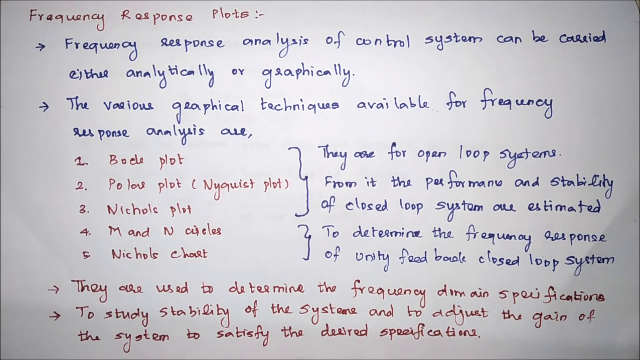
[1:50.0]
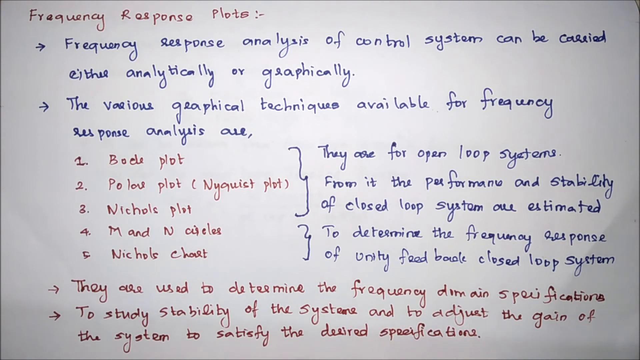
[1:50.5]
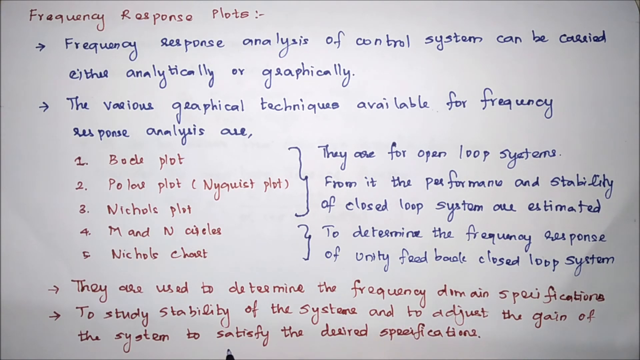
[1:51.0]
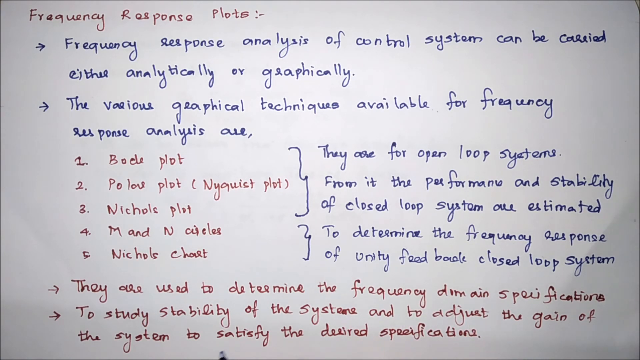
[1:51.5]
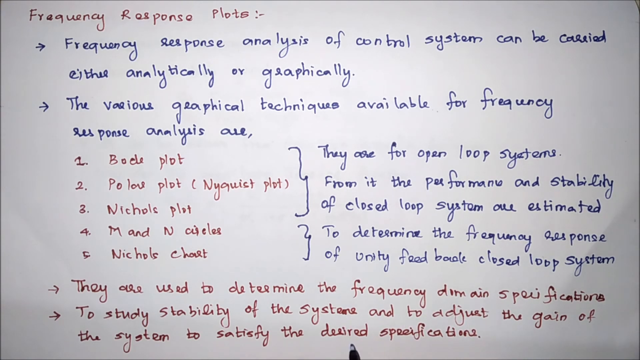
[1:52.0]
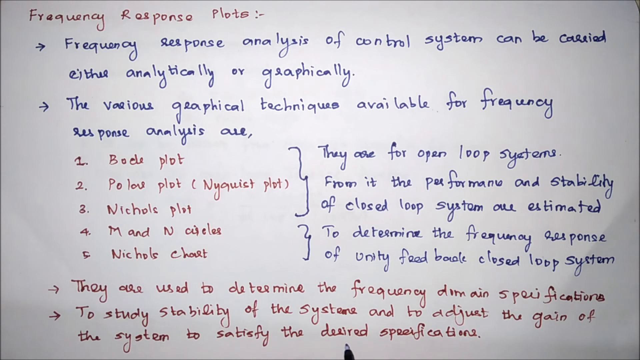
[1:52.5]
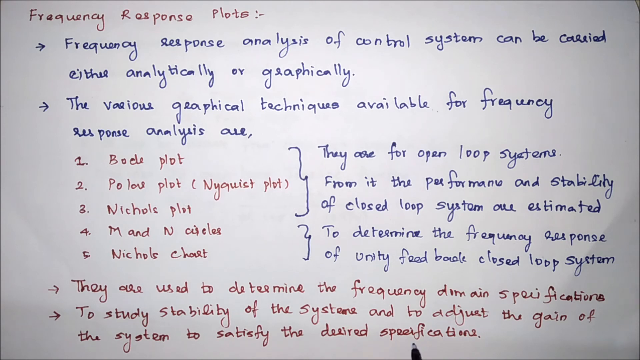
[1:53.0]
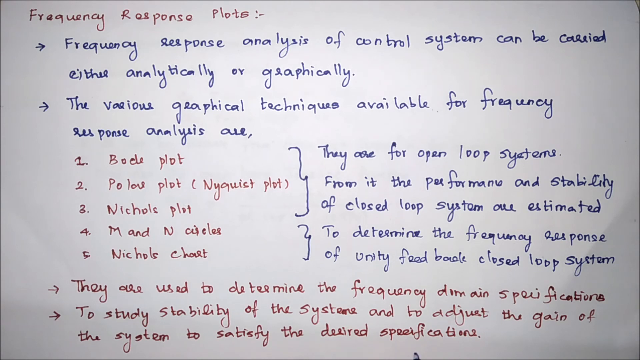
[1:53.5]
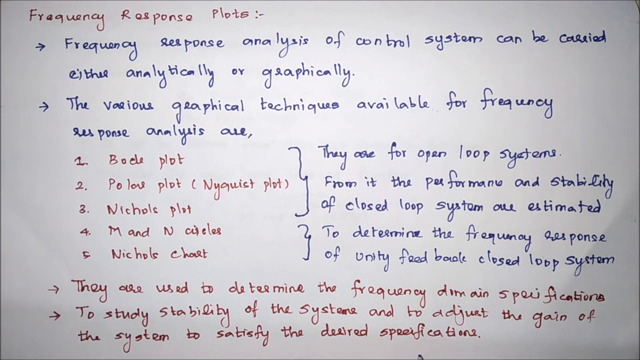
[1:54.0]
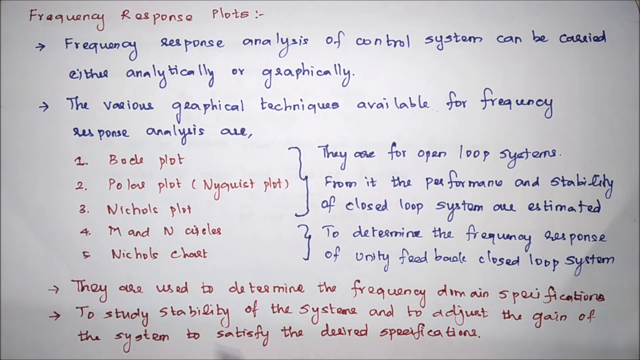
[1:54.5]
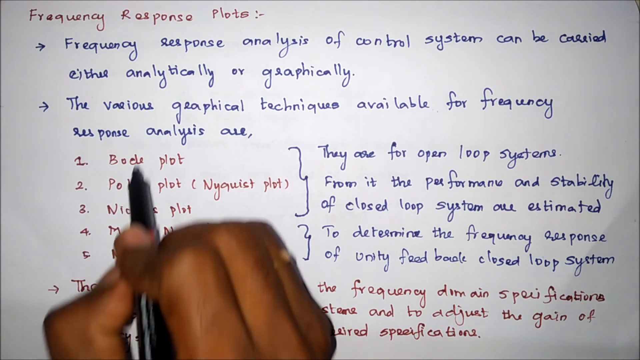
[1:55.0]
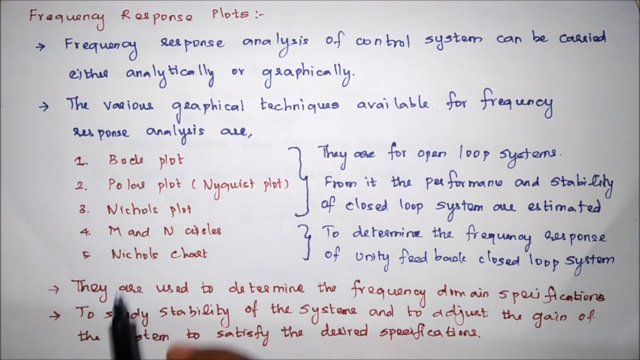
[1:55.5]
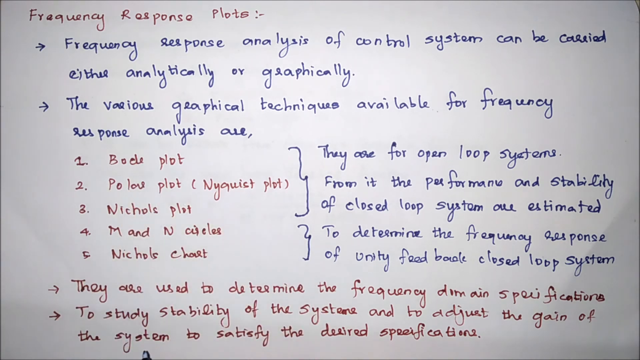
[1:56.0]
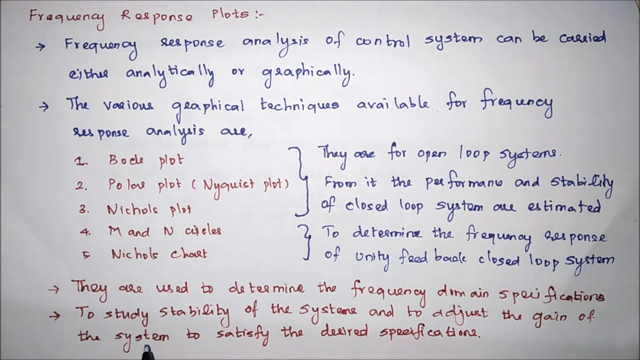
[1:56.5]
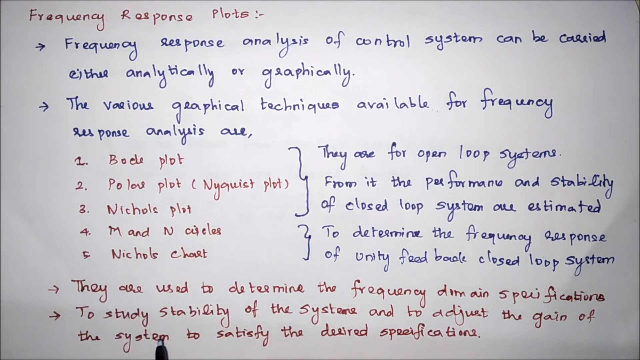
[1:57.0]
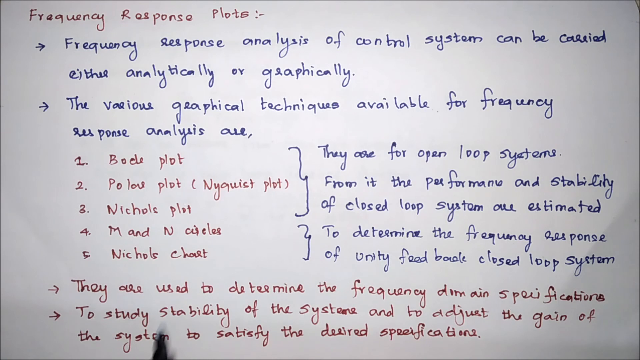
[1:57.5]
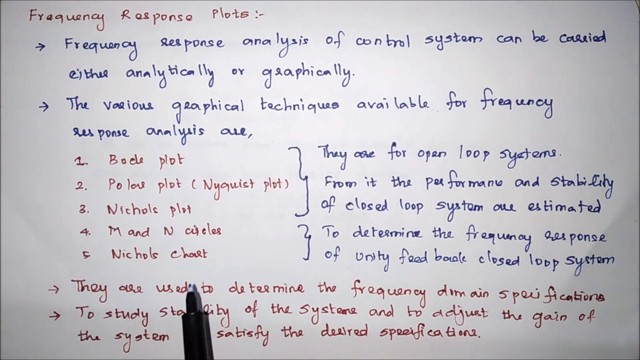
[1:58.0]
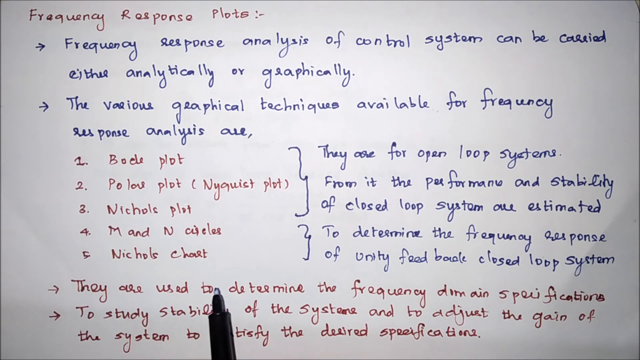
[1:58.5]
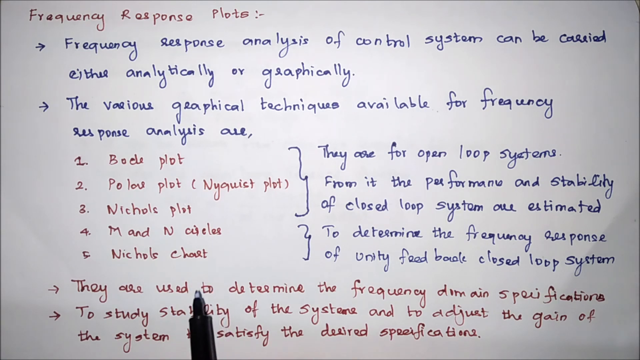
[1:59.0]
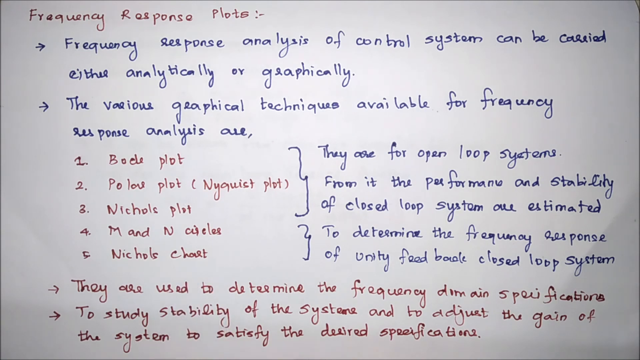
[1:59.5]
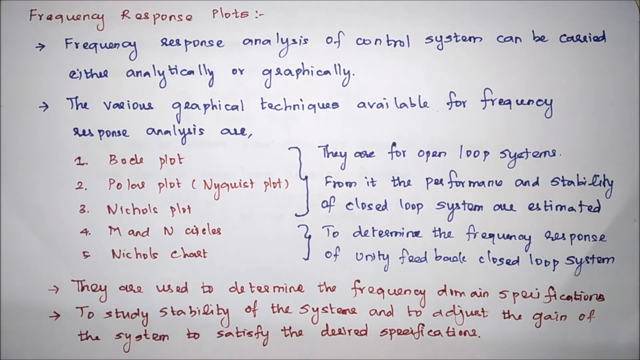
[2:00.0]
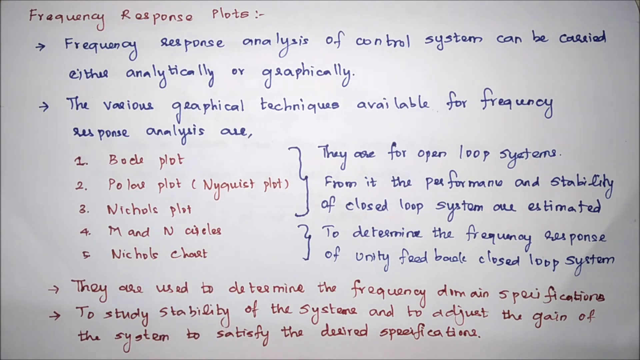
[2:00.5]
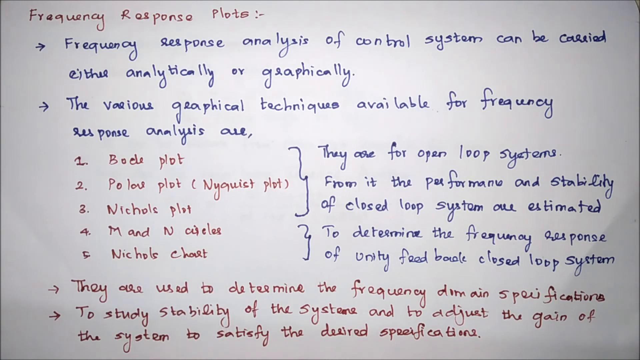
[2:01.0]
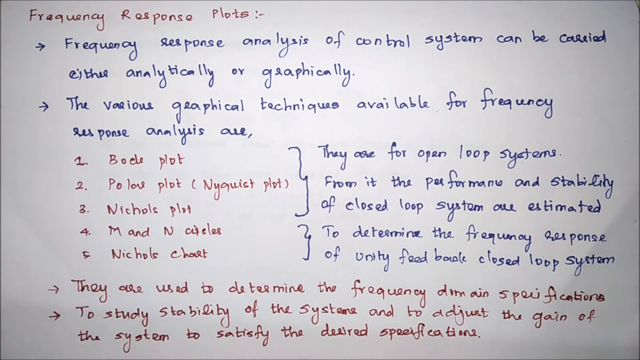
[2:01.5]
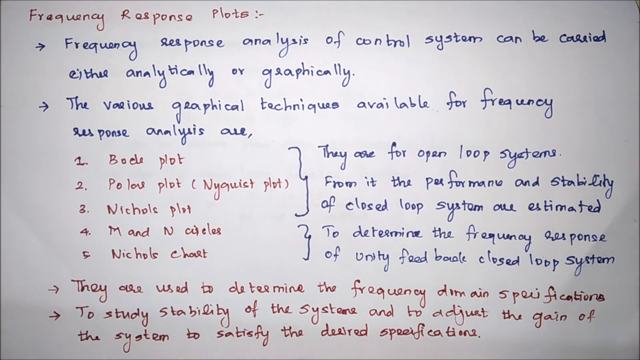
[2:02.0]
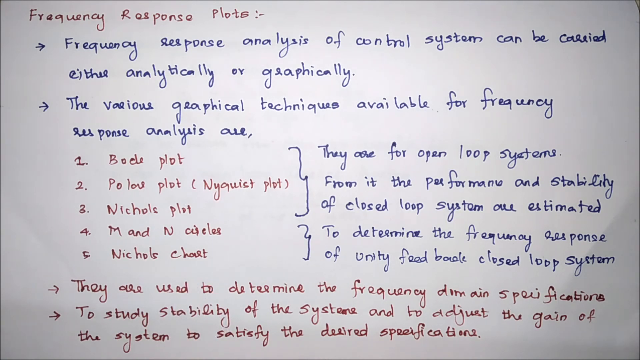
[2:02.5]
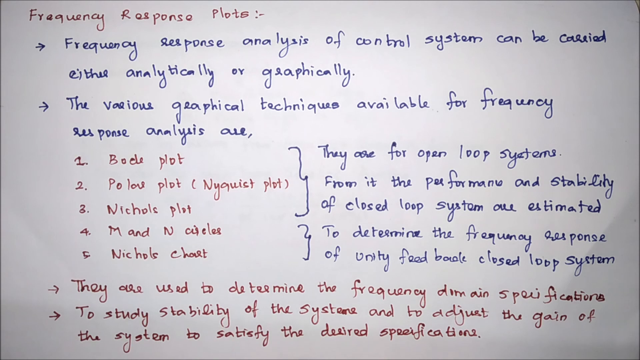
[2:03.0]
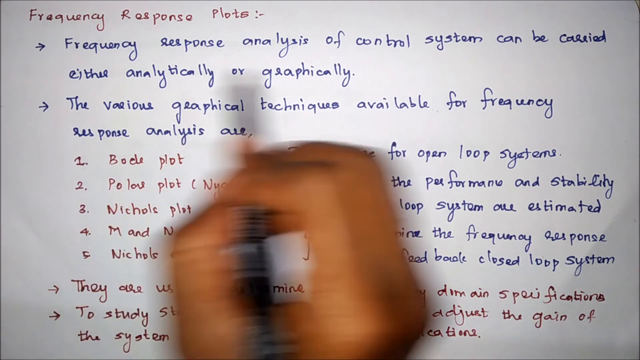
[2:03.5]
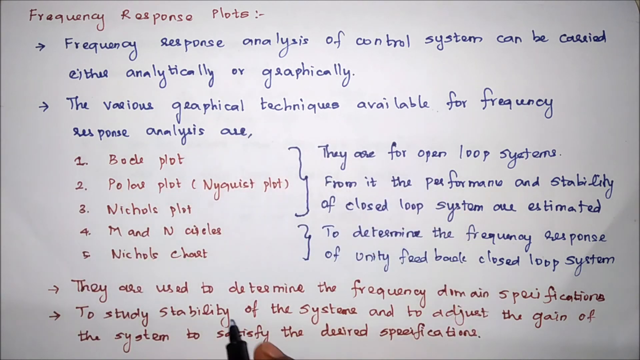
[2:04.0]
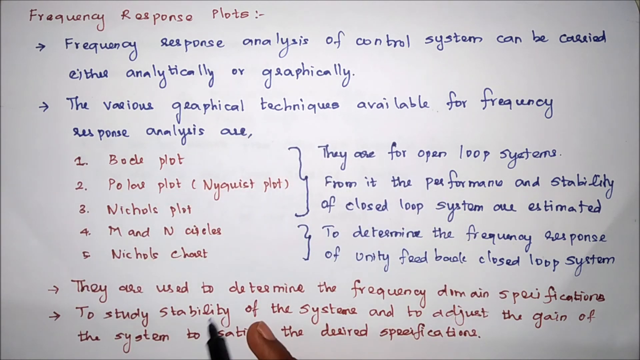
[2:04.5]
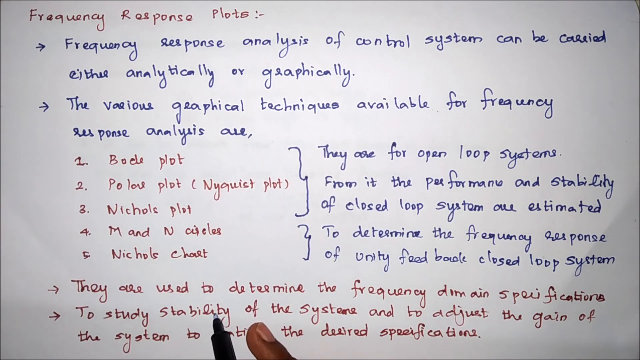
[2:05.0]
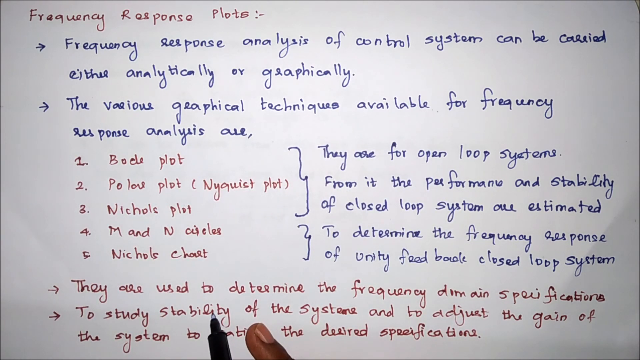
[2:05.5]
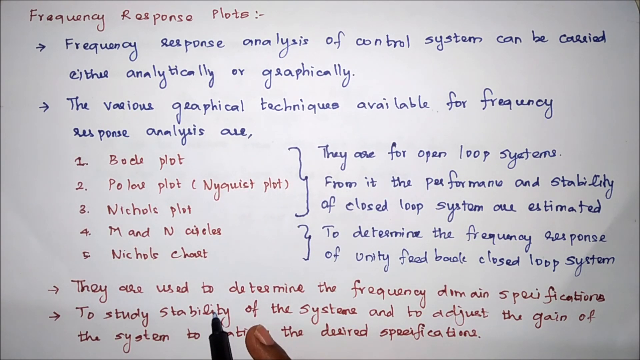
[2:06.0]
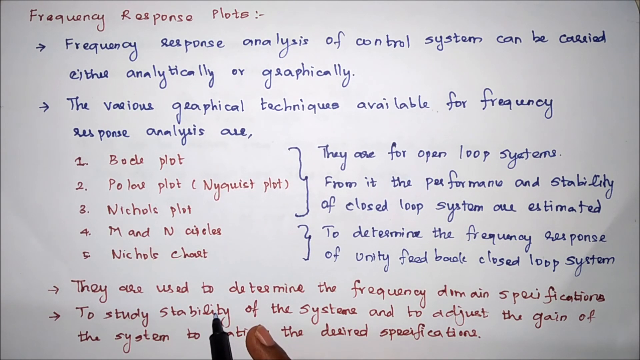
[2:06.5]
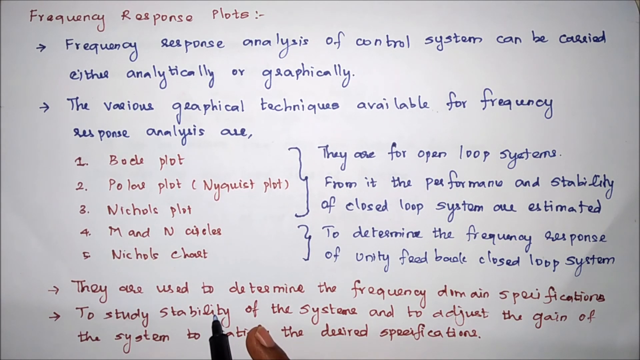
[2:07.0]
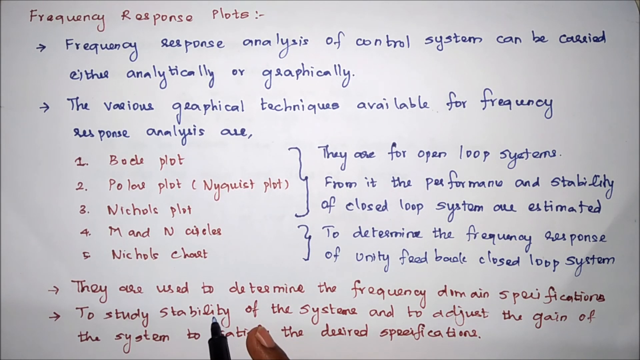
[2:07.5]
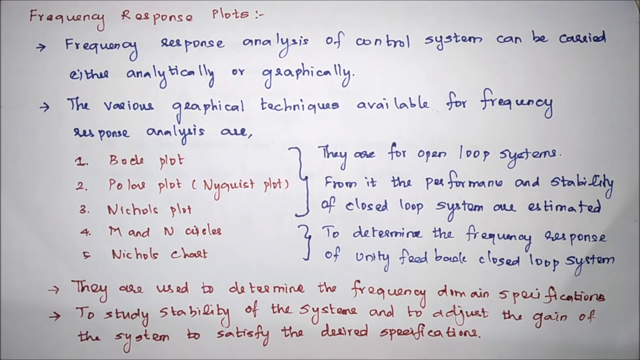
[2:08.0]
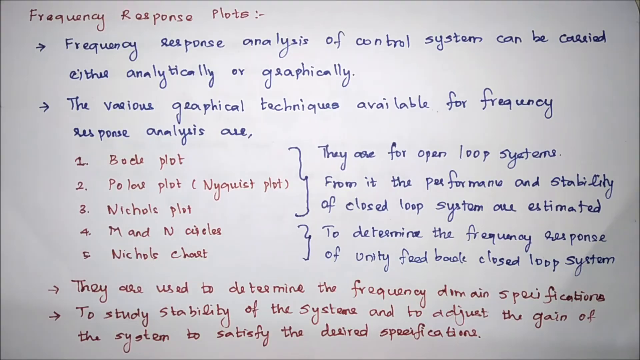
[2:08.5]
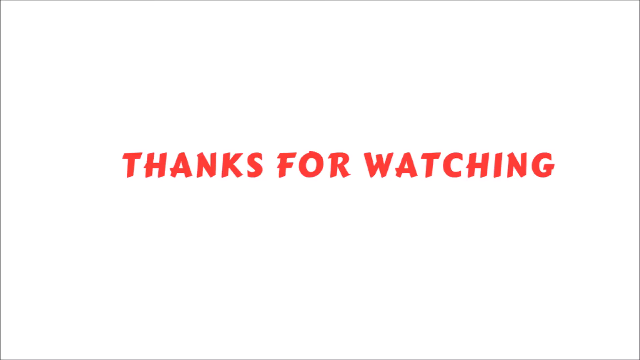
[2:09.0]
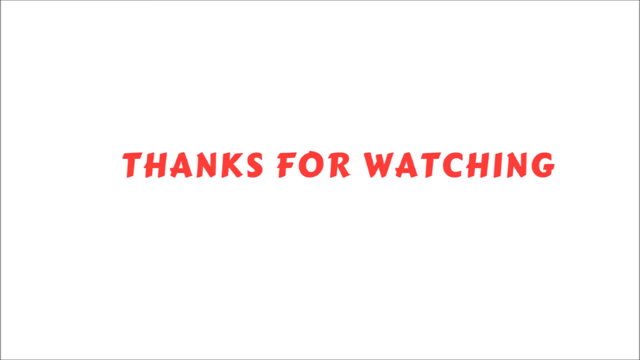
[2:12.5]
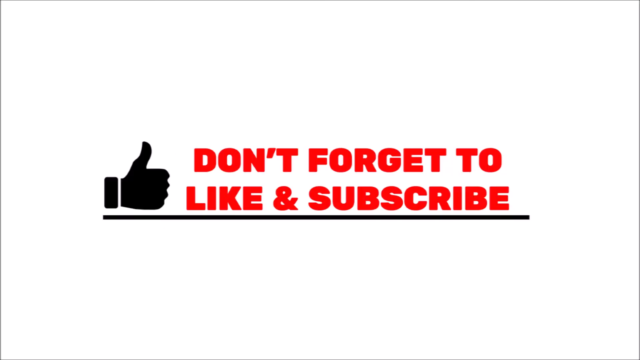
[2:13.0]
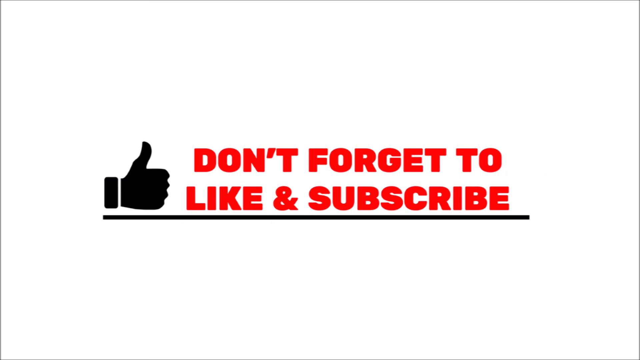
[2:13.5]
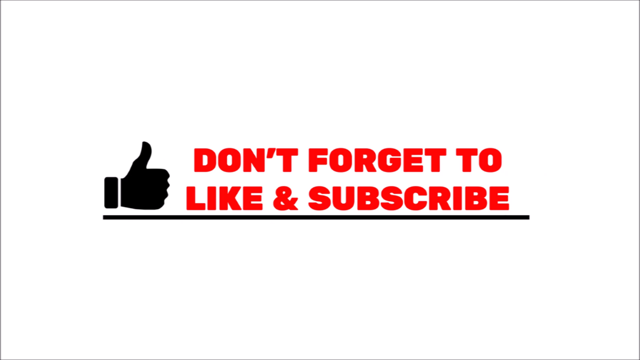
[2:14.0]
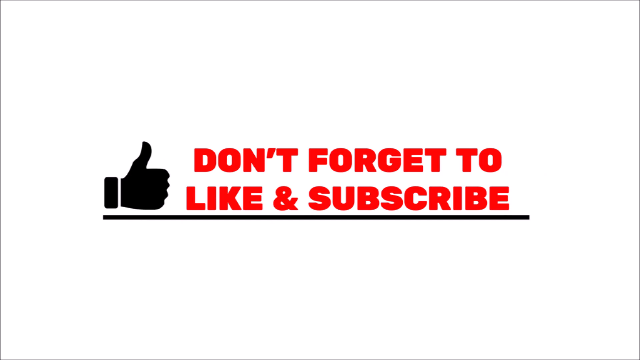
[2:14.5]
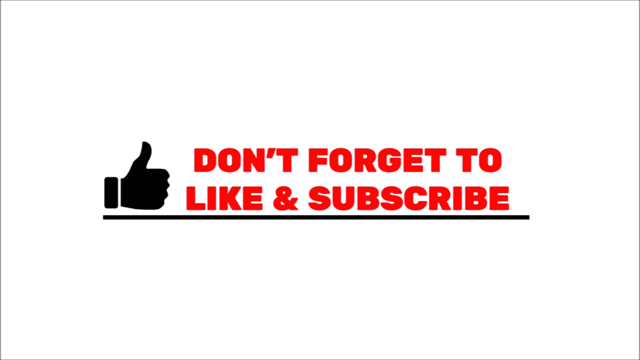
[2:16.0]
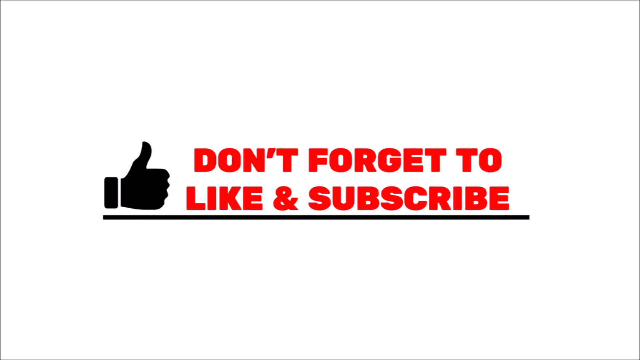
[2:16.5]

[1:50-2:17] A white paper shows words and phrases written in red ink and others in blue ink. A list labeled 1, 2, 3, 4 and 5 is written in red ink, with sentences directly next to it, and directly underneath are two bullet-pointed sentences in red ink. The tutor's hand comes up and points at different information, focusing on the two sentences at the very bottom of the page and pointing specifically at "stability". The video then ends on a white screen that says "thank you for watching", followed by a screen with a thumbs up emoji that says "don't forget to like and subscribe".